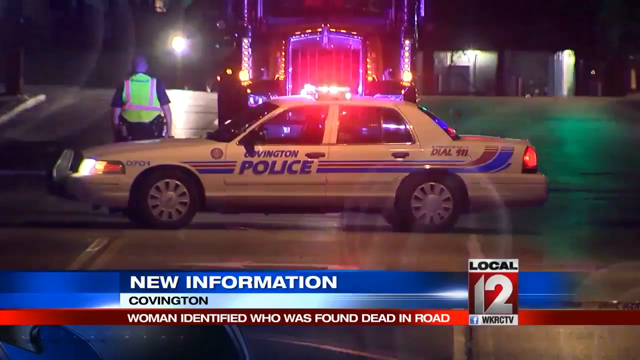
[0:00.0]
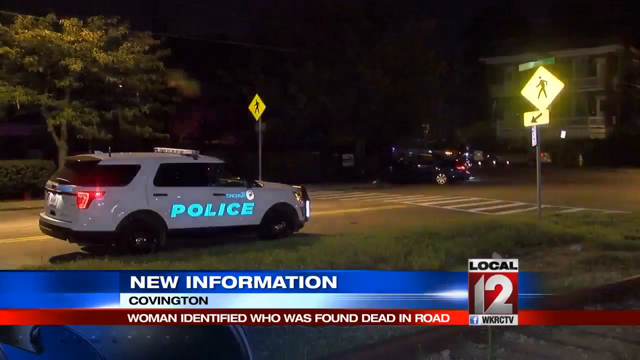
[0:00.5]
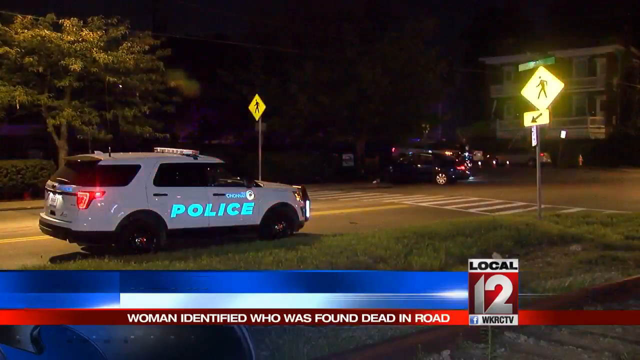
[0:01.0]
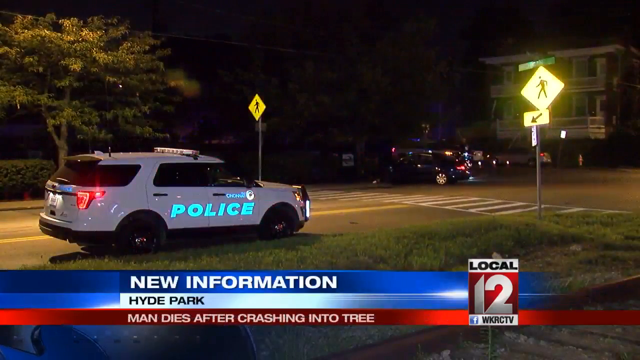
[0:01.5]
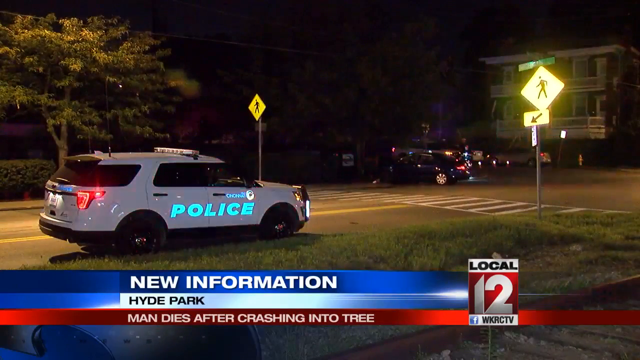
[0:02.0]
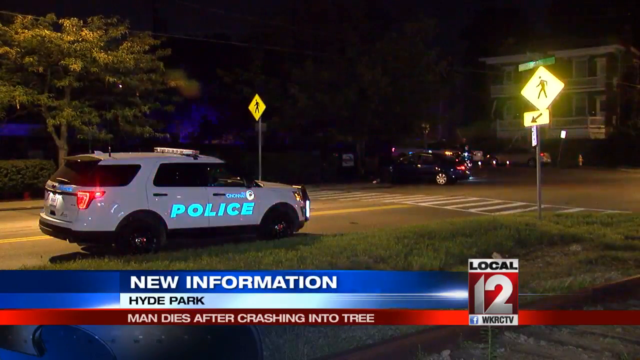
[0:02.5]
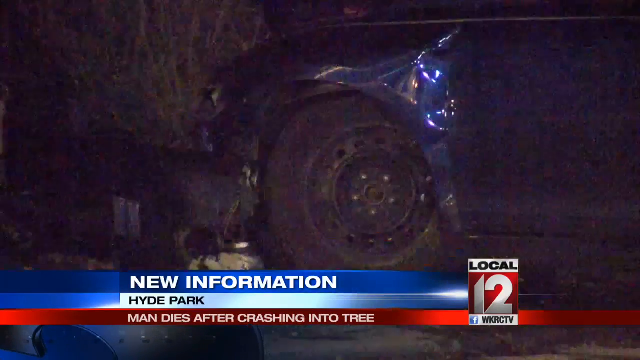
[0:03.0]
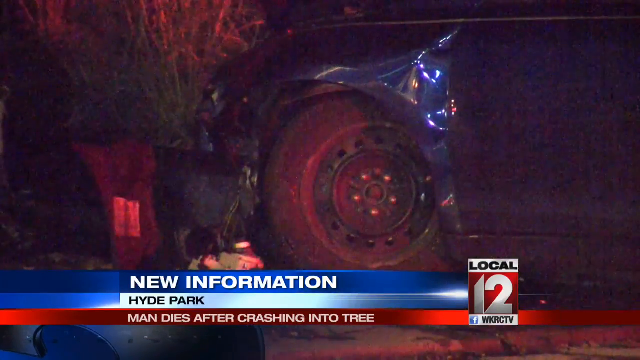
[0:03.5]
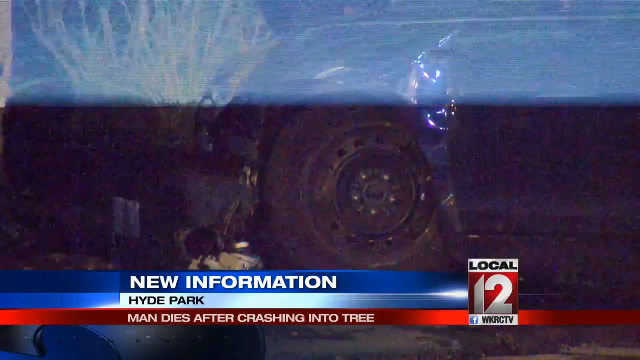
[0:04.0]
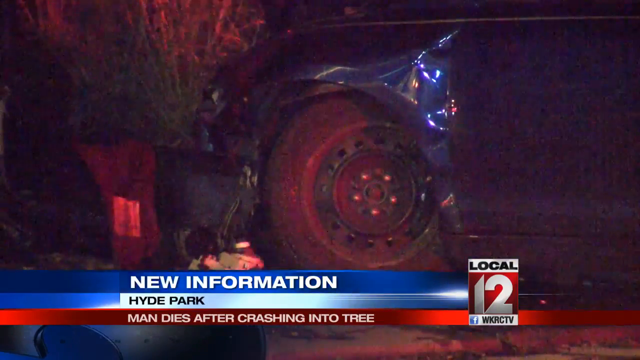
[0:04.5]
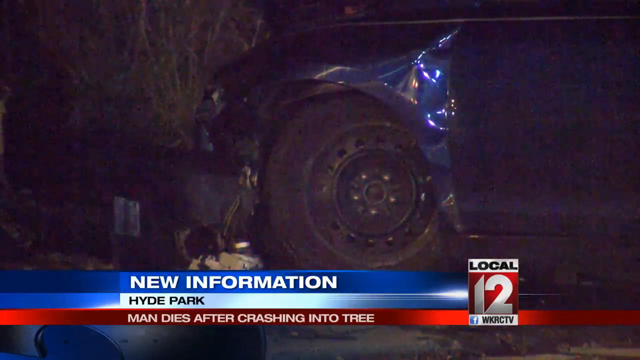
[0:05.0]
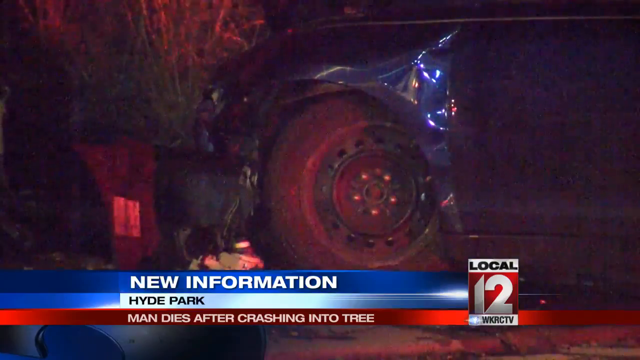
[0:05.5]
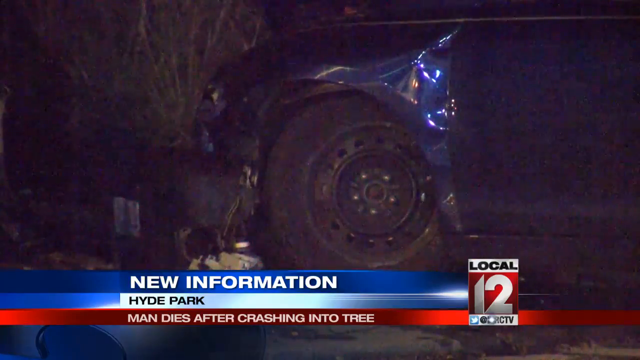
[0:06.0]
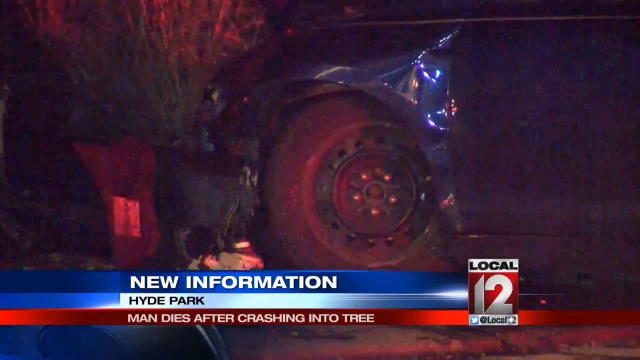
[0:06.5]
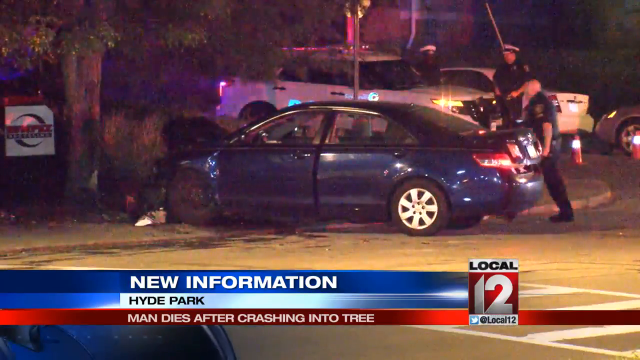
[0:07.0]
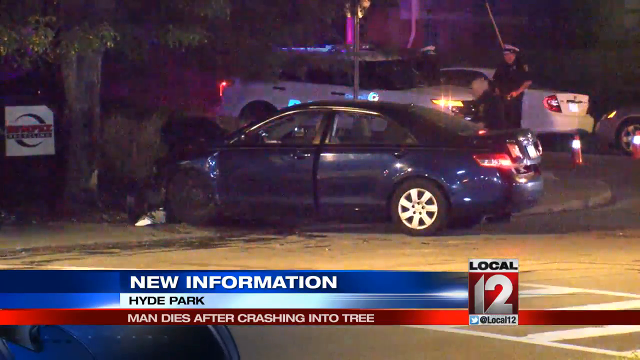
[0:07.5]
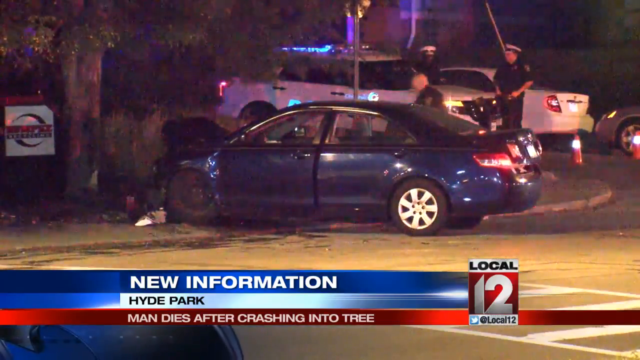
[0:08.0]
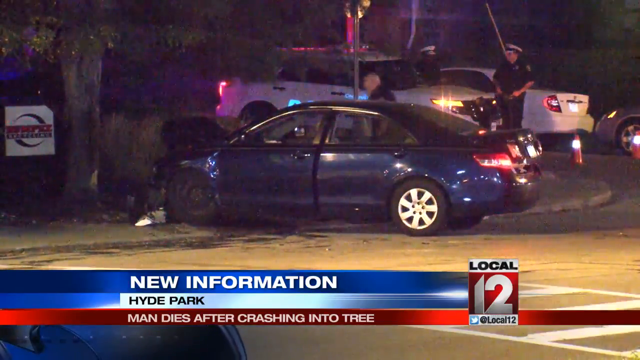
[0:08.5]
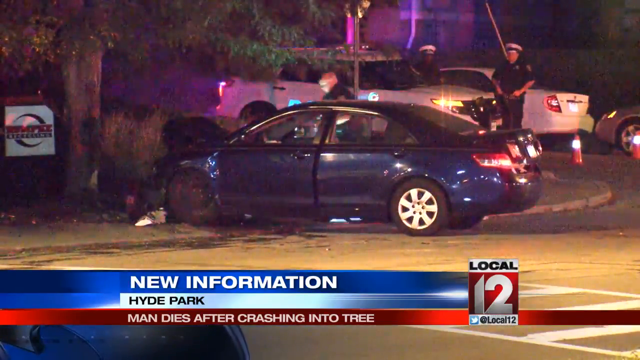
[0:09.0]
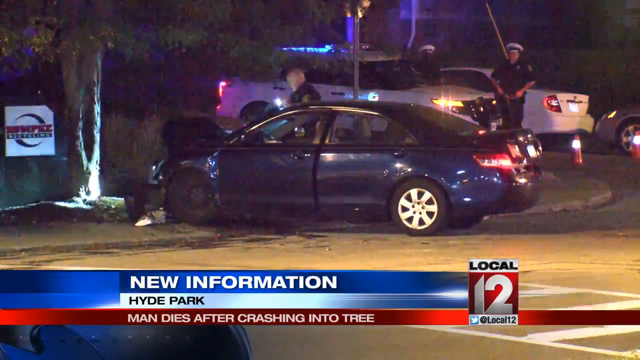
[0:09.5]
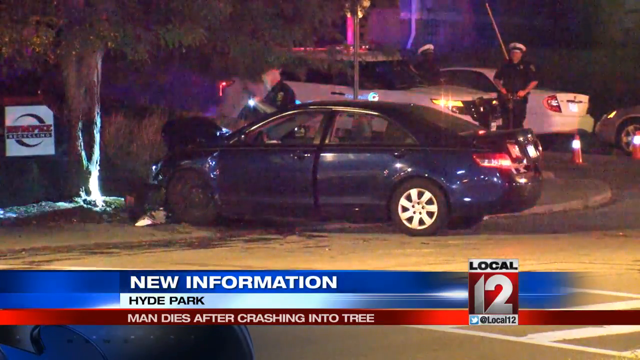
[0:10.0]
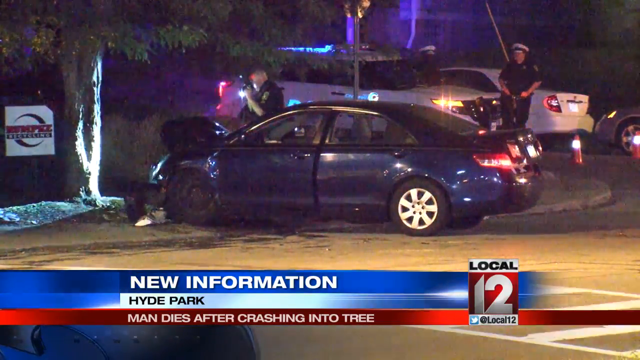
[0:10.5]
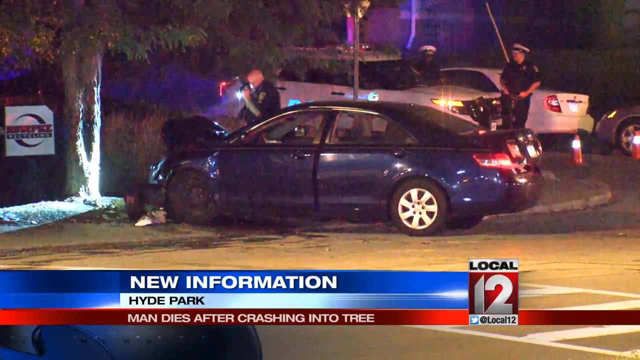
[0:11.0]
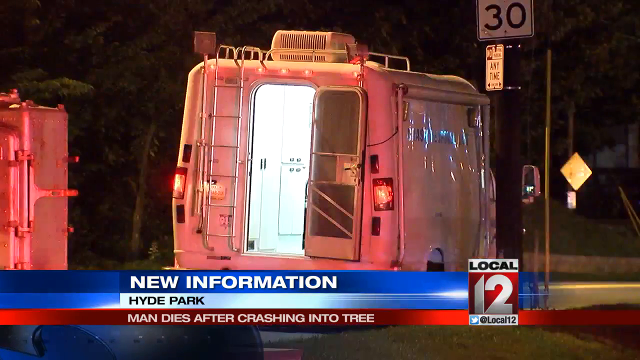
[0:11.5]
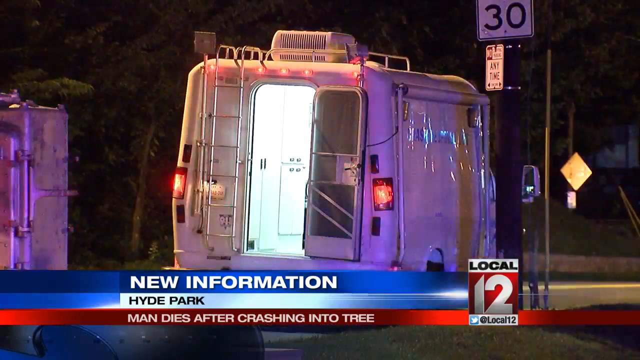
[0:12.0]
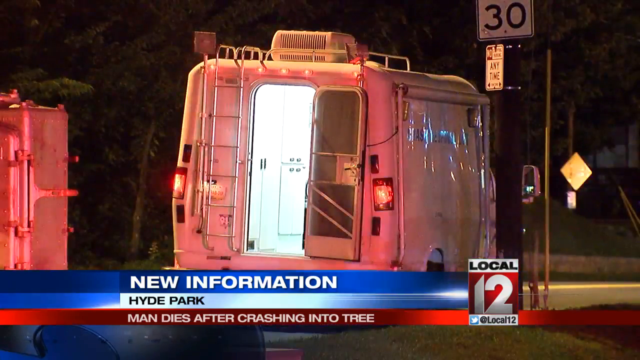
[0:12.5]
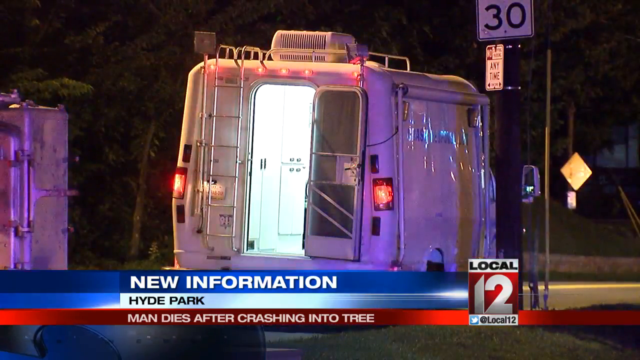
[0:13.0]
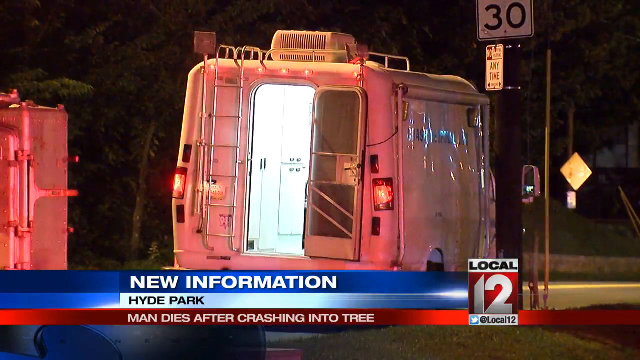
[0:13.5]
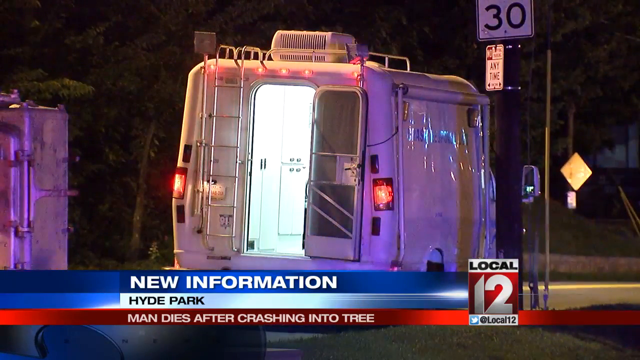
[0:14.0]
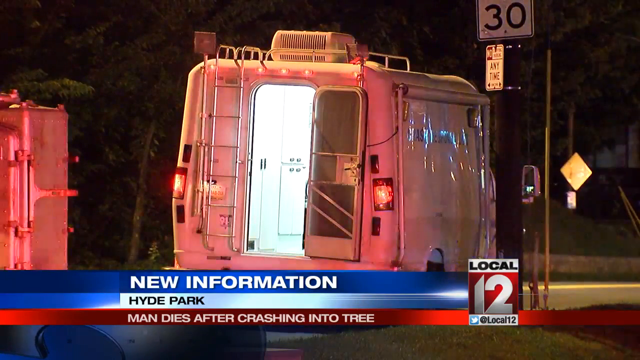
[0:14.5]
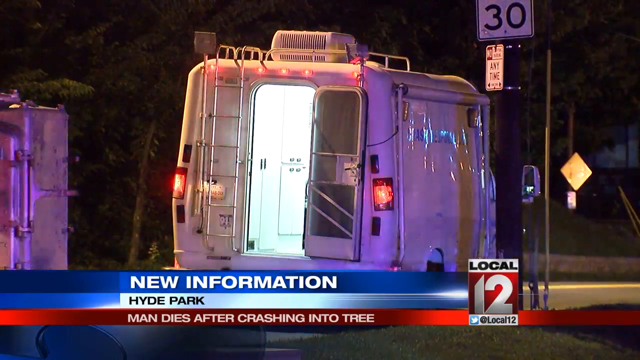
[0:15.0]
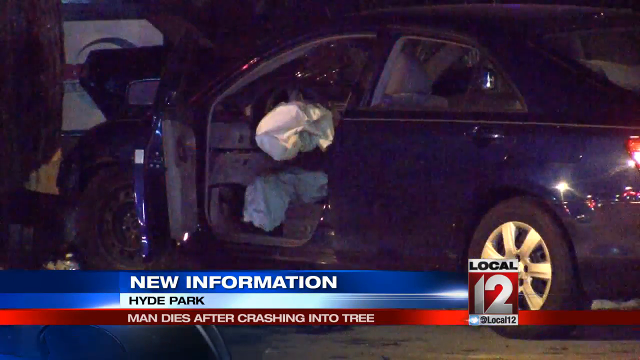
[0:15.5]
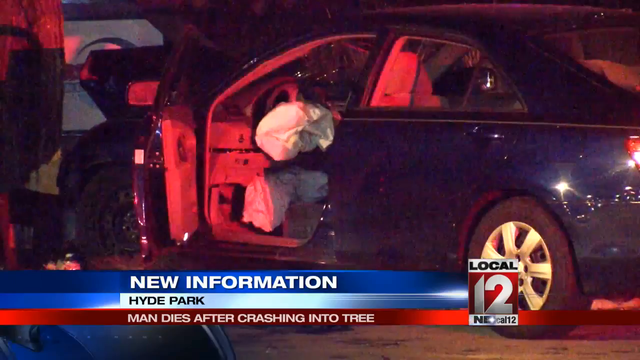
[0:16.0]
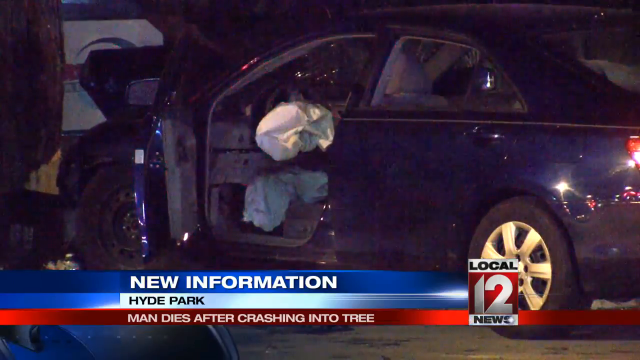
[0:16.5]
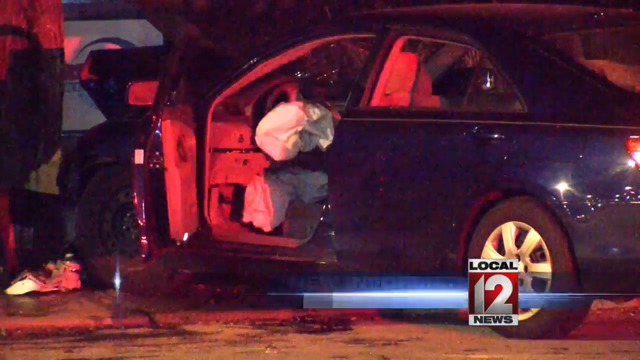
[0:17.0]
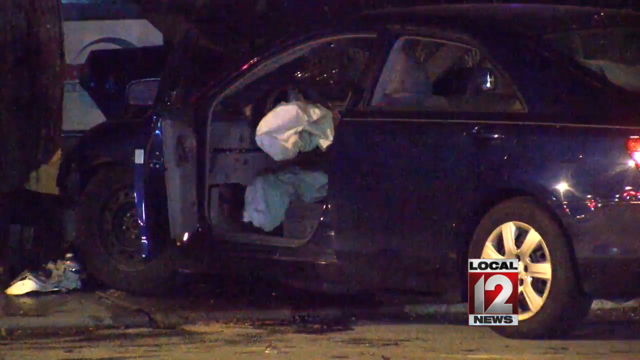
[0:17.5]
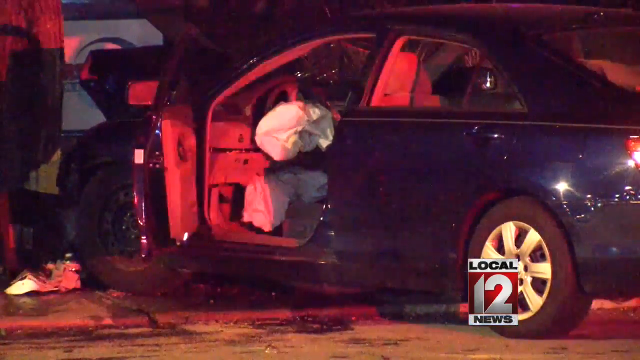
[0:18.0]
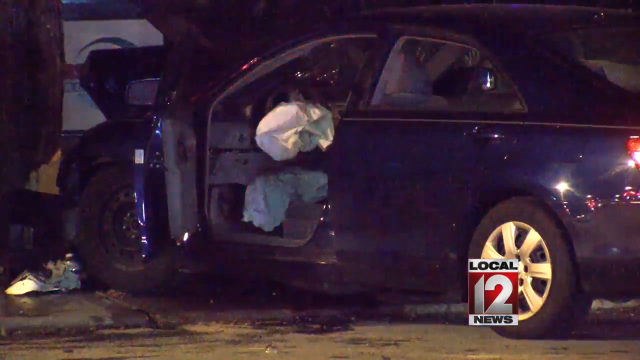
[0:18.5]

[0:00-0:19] The scene appears to show some sort of accident investigation in a news item. A "local 12 news" icon is at the bottom of the screen, and the banner at the bottom reads "new information Covington woman identified who was found dead in road." There is a grass area in the foreground, then a crossroads intersection, with a police car almost in the foreground on the left-hand side of the scene; this seems to be a live event. The video cuts to a close-up of the front of a car by the tyre, so a big wheel is on the screen, and the car is crumpled, with bumpers missing and the wing crumpled in; there looks to be quite a bit of damage. The banner at the bottom changes slightly and now reads "headline, new information, Hyde Park, man dies after crashing into tree." The camera pulls back from the wheel to show the whole car, which is just by a tree. Several policemen are looking at the scene with torches. The video cuts to a close-up of an ambulance, then back to the car in a medium shot, with the whole car in the picture and filling it. The driver's-side door is open and the airbag has been deployed.